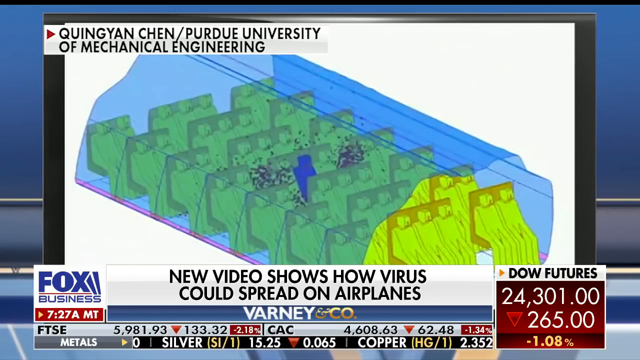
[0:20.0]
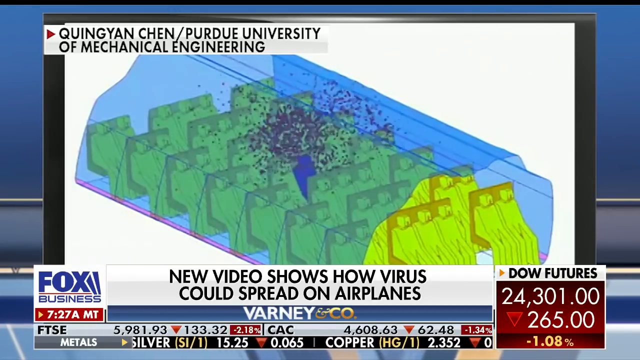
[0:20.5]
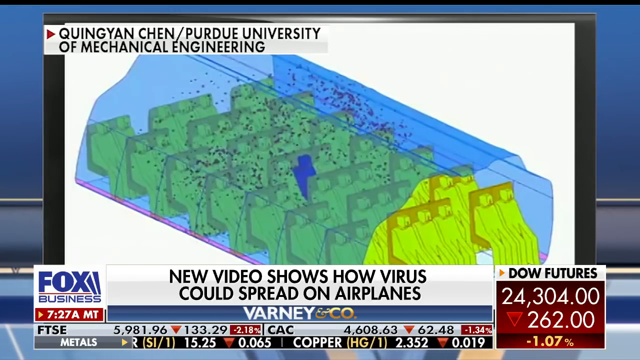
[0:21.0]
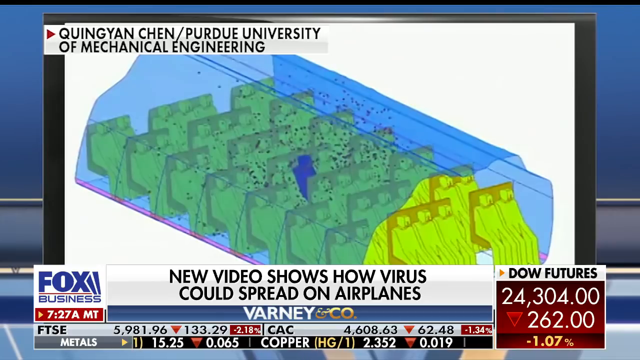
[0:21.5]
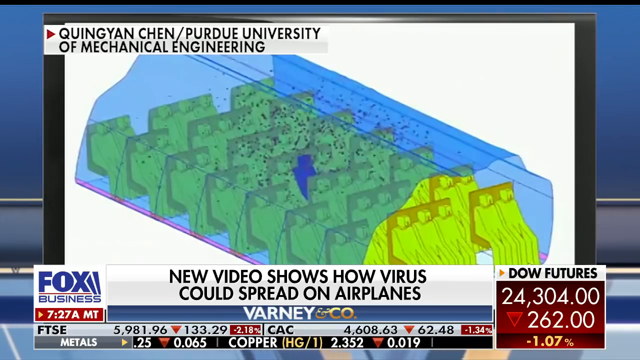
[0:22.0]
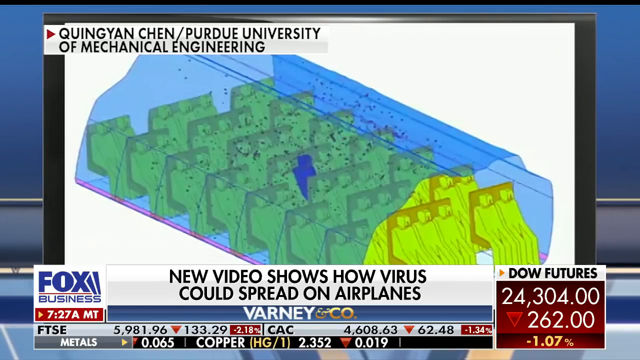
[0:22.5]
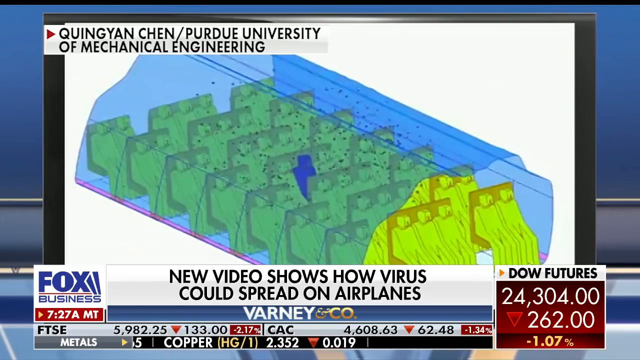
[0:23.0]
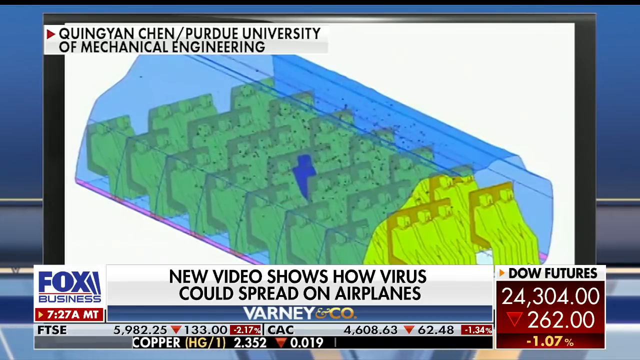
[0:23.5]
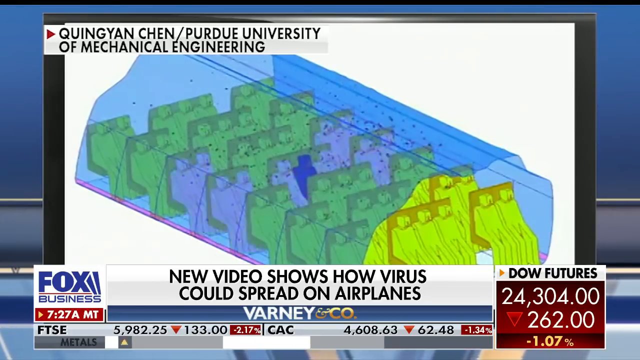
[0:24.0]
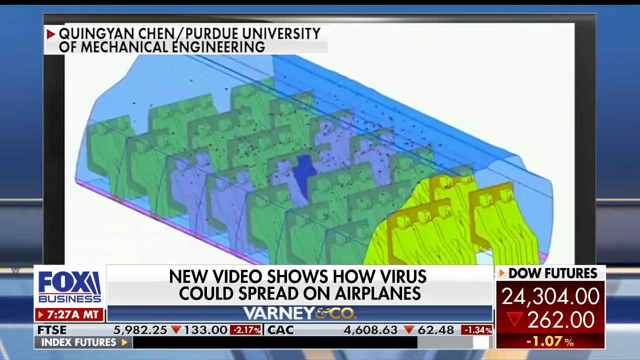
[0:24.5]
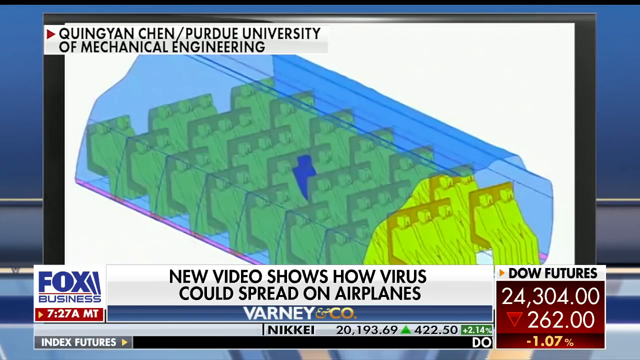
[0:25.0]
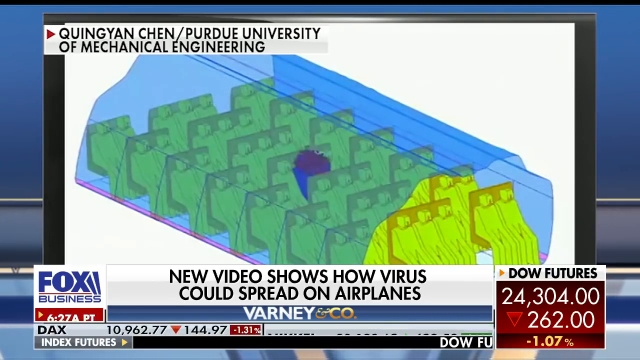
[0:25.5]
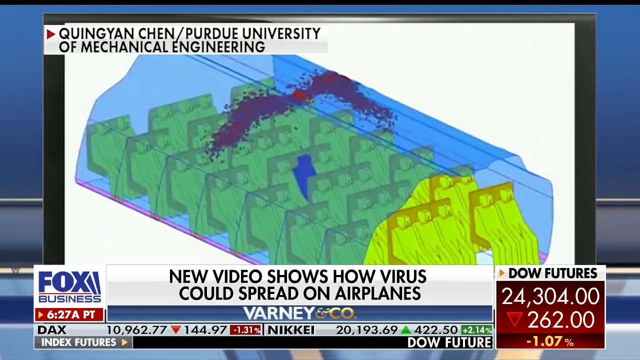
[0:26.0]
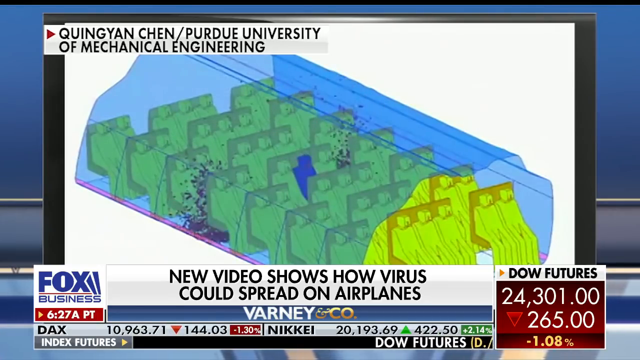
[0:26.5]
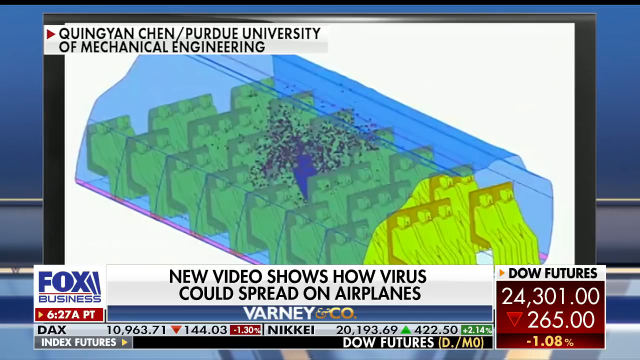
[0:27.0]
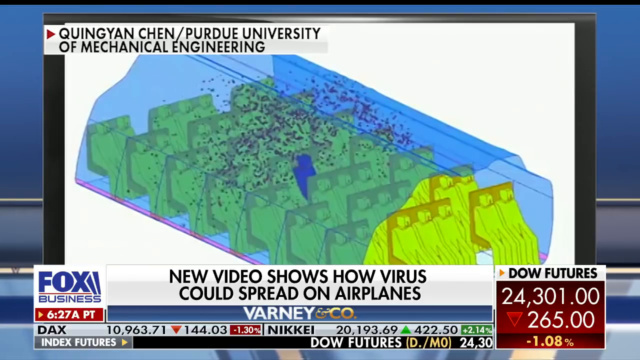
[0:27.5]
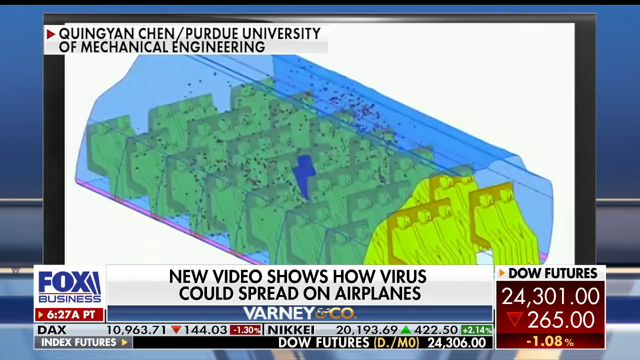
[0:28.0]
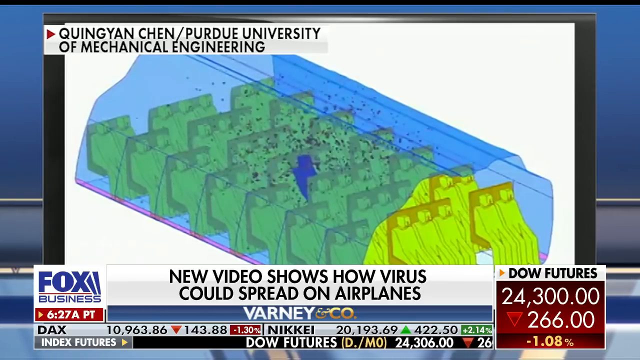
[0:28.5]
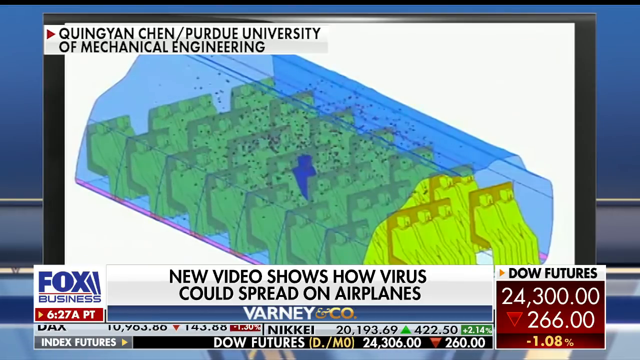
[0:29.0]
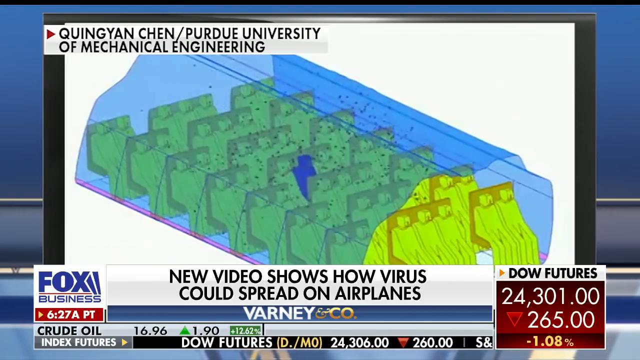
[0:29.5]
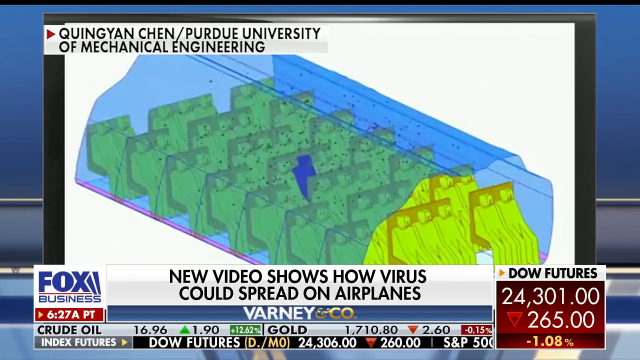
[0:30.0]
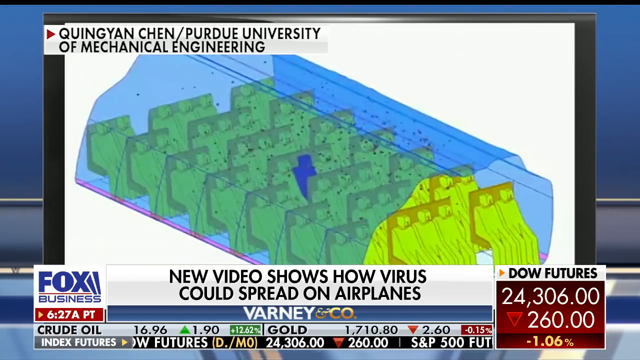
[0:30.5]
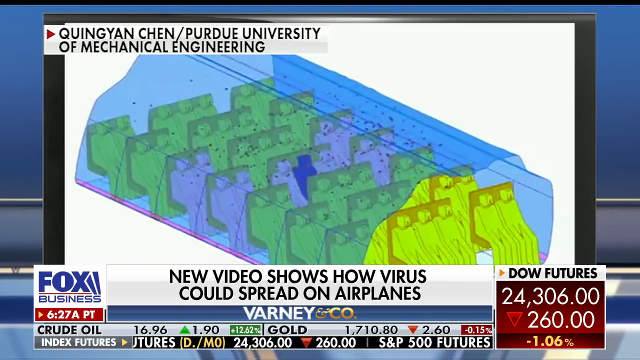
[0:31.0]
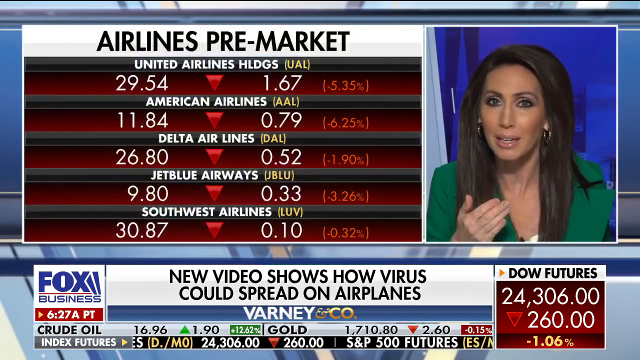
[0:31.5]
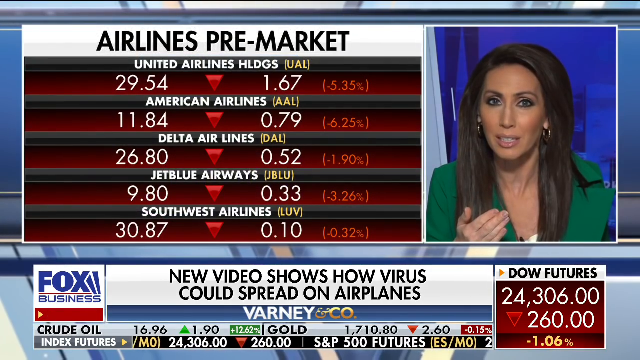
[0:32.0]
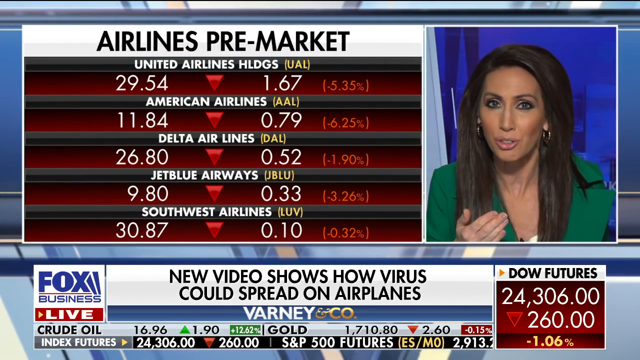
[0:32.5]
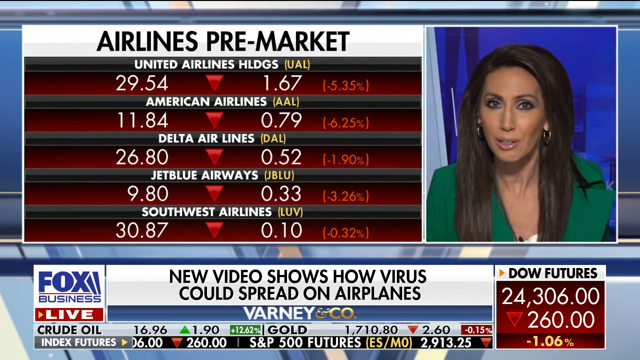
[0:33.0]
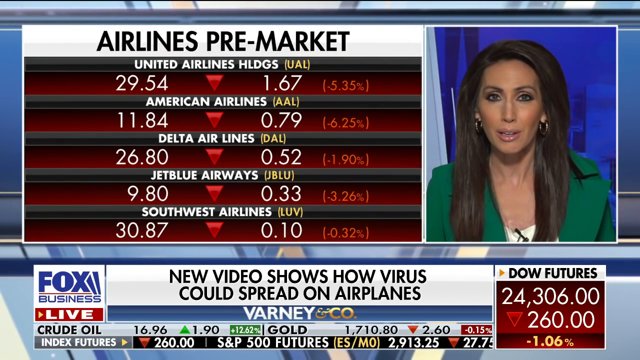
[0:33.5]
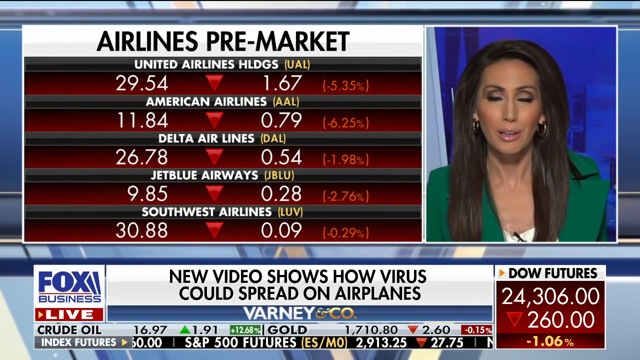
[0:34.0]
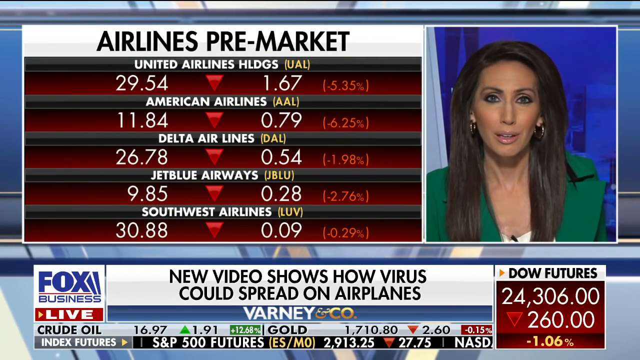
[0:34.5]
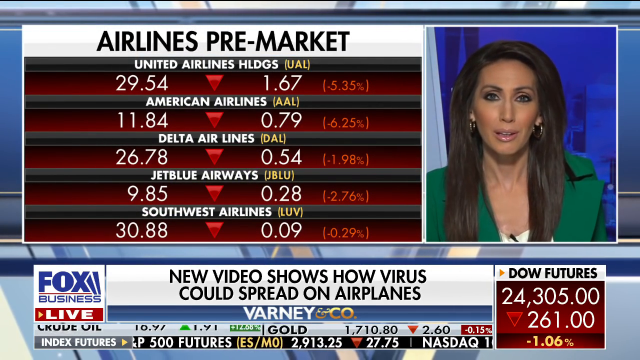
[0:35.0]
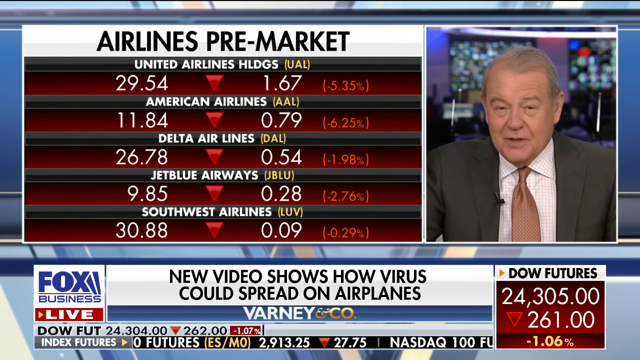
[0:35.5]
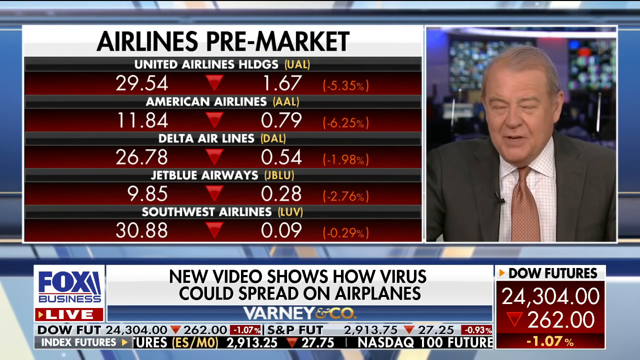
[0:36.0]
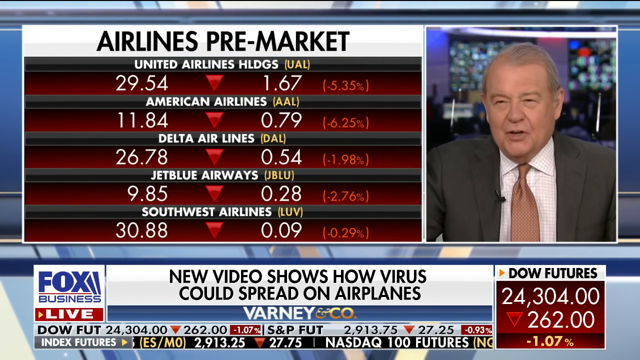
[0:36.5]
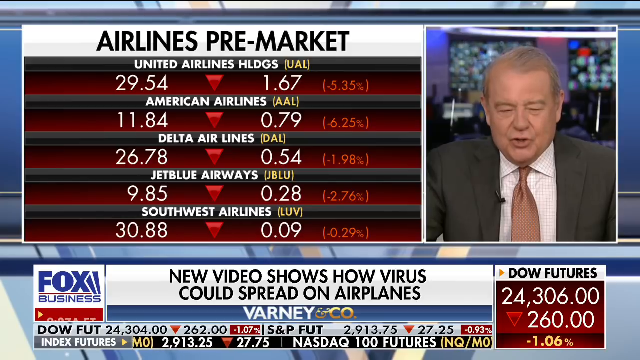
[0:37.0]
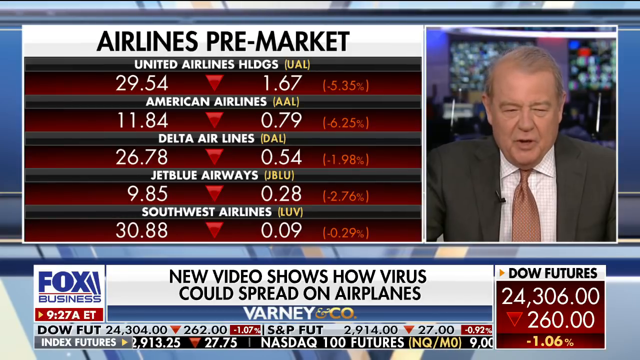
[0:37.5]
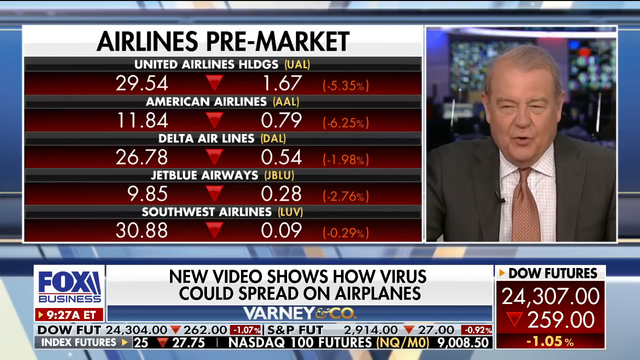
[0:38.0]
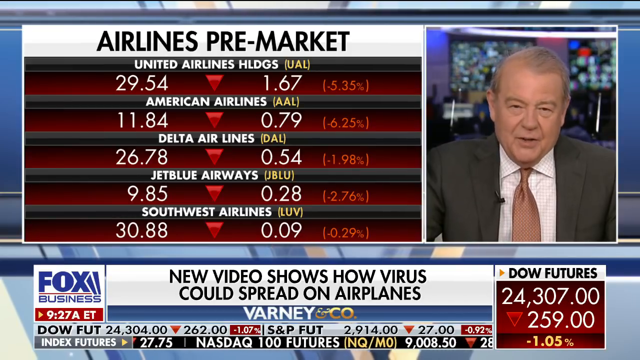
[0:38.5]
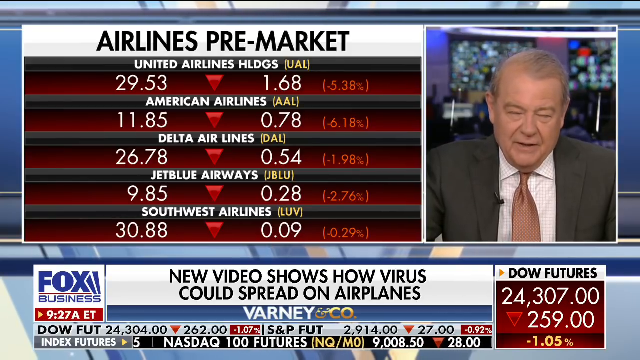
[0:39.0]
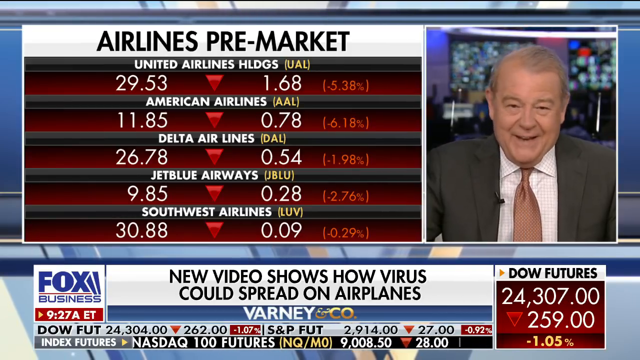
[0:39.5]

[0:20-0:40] After the other passengers turn purple, the animation repeats, showing the infected passenger in blue in the middle of the airplane cabin. The viruses first spread in two large groups, then scatter and cover the whole cabin. The passengers closest to the blue, infected passenger get hit the most. The scene then pans to a chart titled "Airlines Pre-Market" listing five airlines, all of them down. United Airlines is at the top at 29.54%, down by 5.35%. American Airlines is second at 11.84%, down by 6.25%. The last is Southwest Airlines at 30.87%, down by 0.32%. Delta and JetBlue are also listed. To the right of the chart is a Fox Business News anchor, a woman with long straight hair wearing a green jacket. The view then pans to another news anchor who looks like an older man, wearing a blazer and an orange tie.